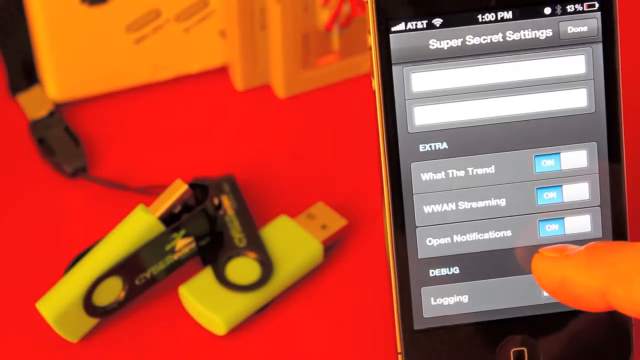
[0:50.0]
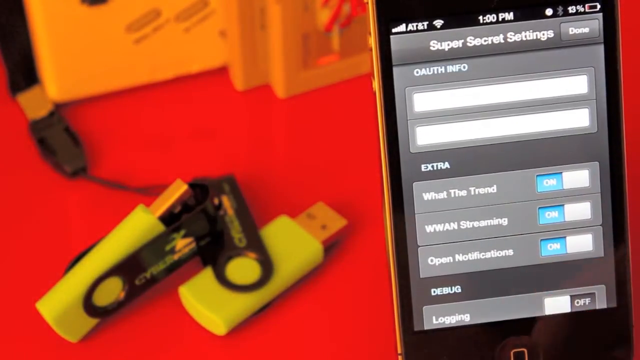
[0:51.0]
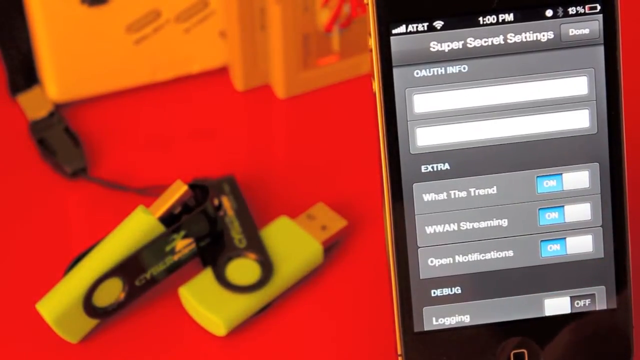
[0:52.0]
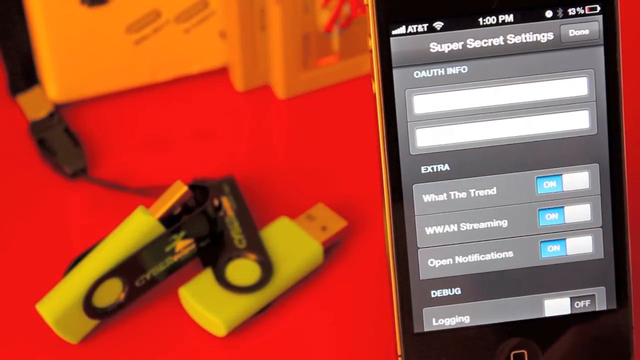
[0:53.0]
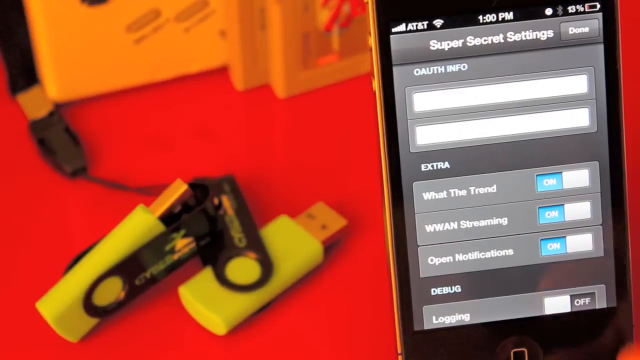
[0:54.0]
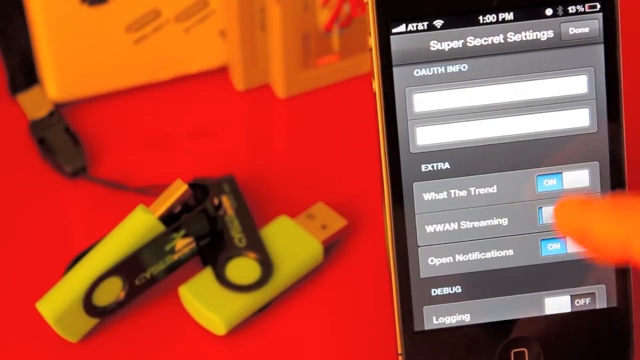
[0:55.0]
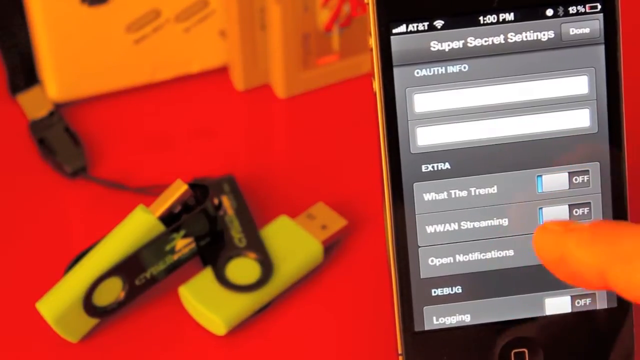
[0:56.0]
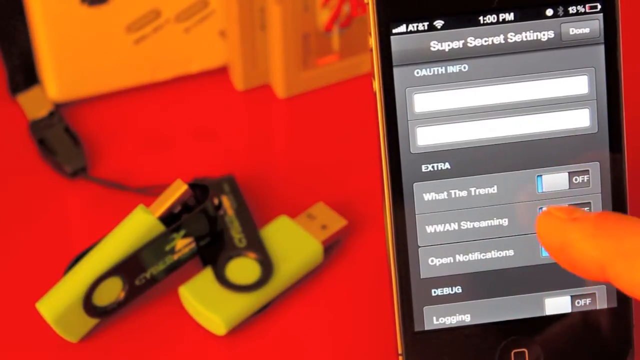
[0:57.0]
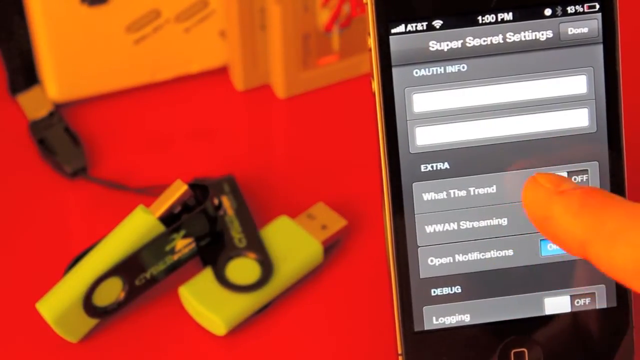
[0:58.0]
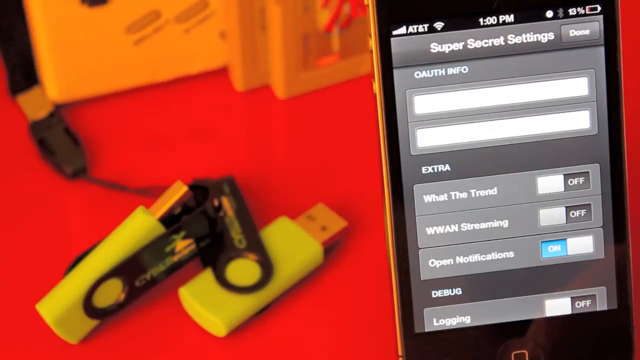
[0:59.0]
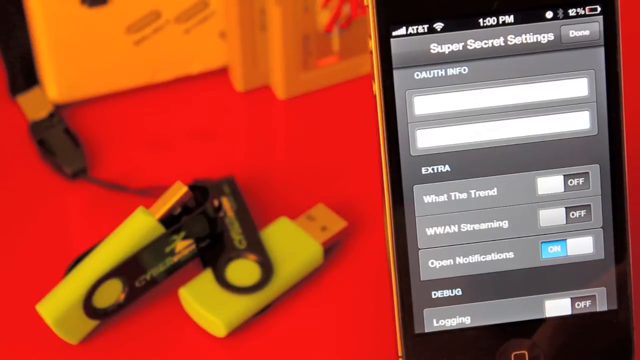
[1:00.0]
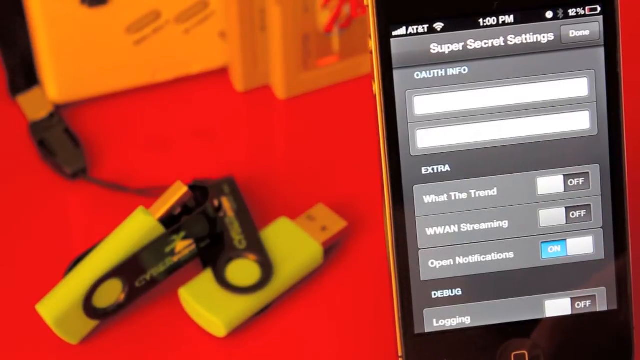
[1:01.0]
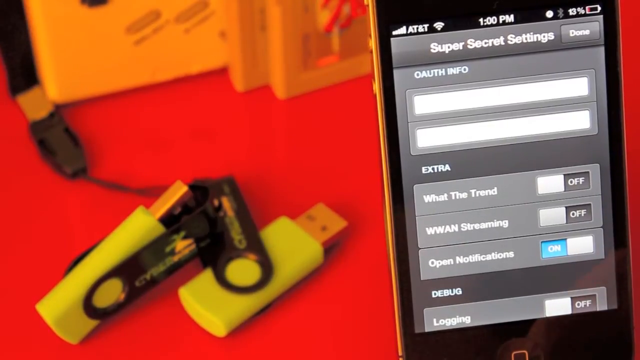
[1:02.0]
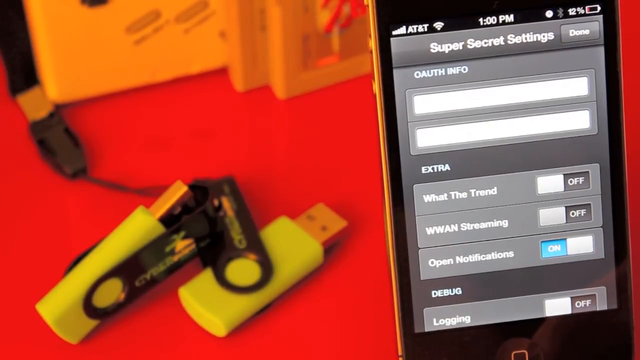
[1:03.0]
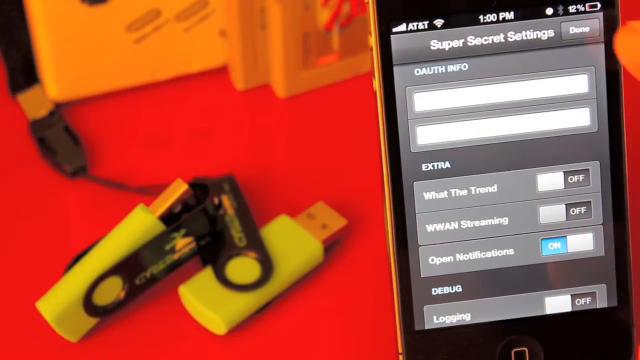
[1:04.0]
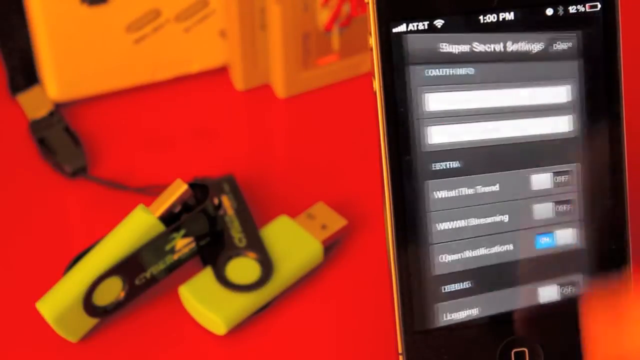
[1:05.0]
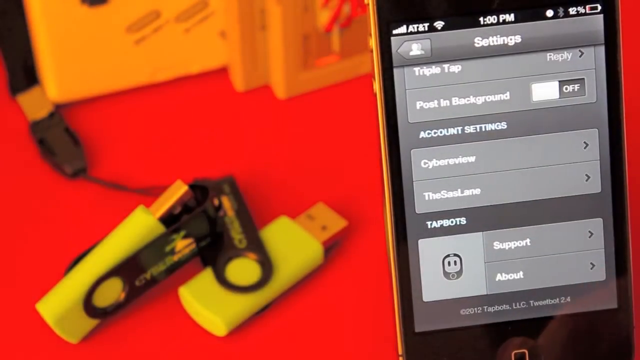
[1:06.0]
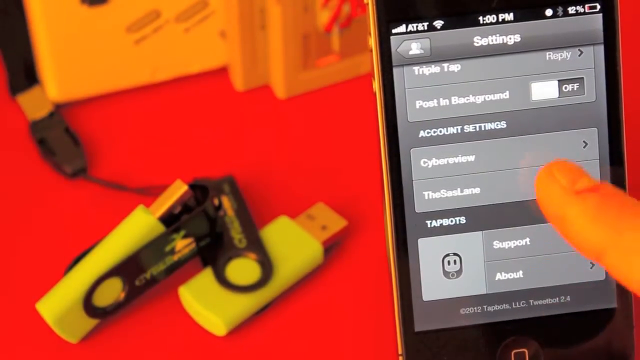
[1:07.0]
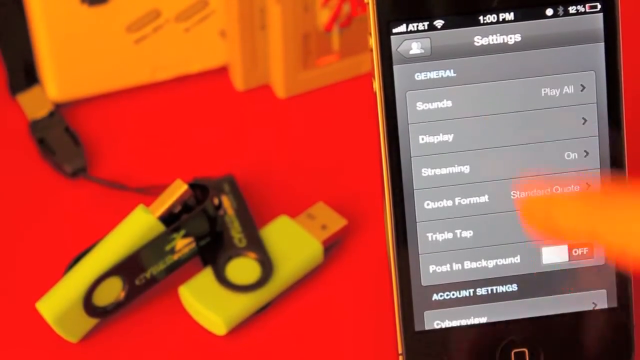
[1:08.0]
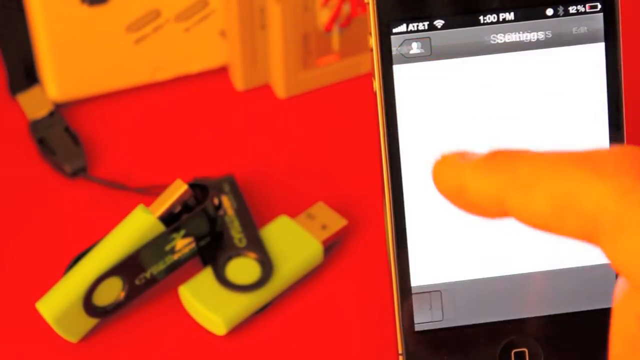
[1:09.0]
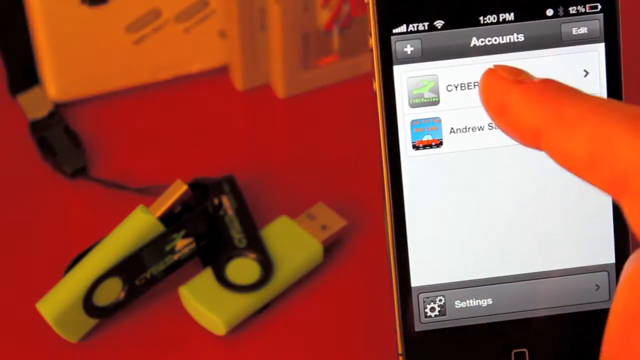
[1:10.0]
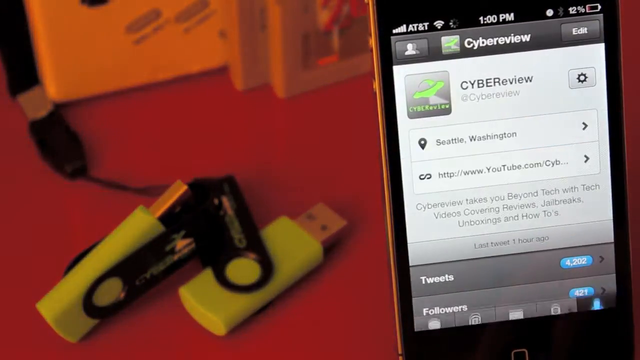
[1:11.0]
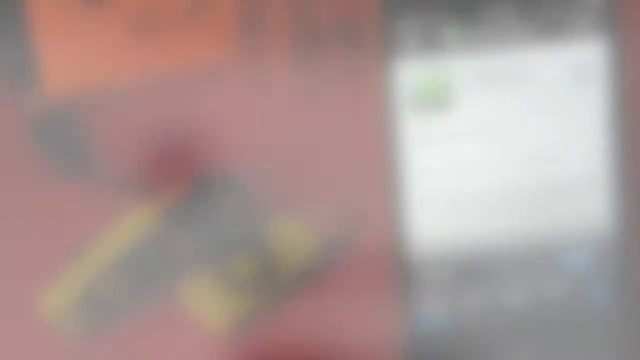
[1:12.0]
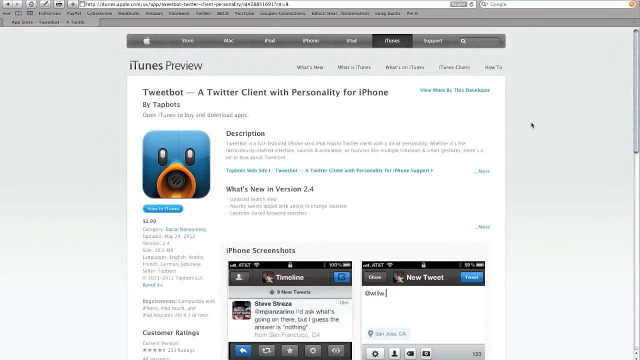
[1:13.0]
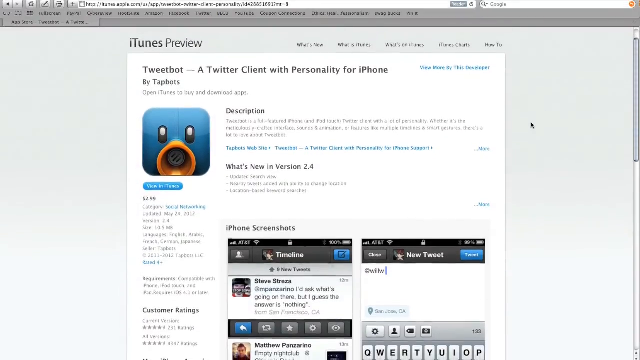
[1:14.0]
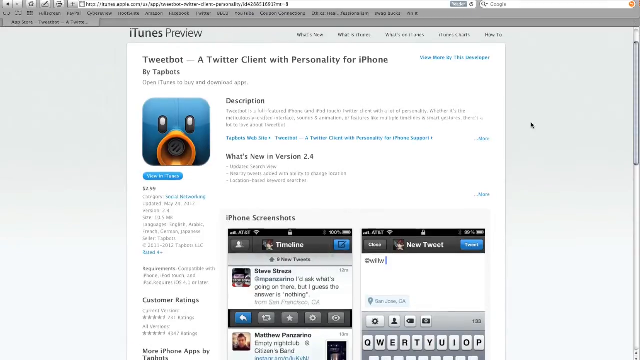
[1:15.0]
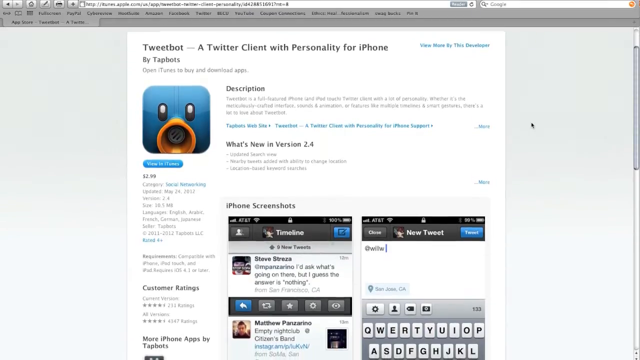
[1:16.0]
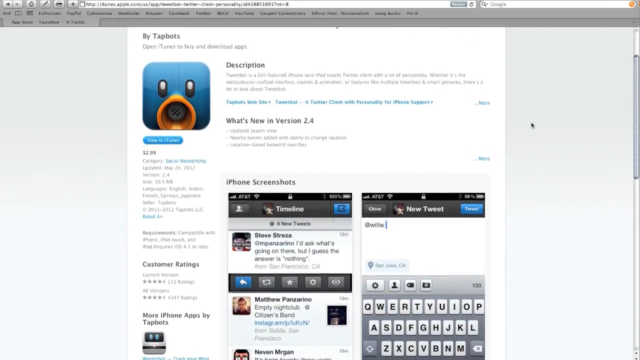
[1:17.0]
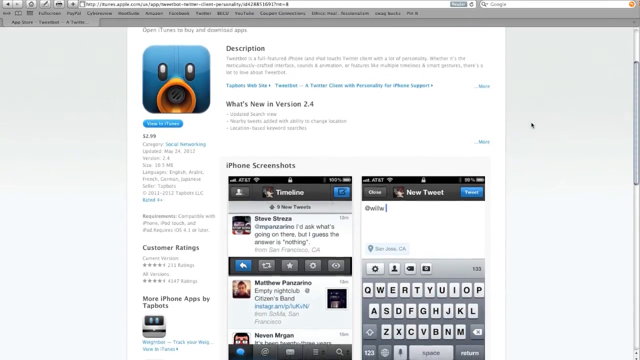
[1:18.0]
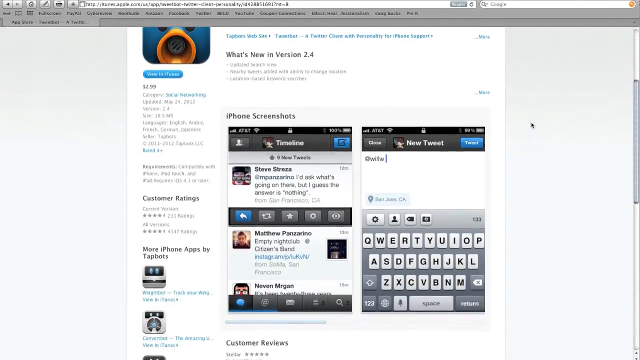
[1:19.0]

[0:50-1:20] The thumb drives lie on the red table beside the small phone on a stand. The phone shows AT&T with full signal, the time 1 p.m., and a 13% charge. The author is looking at a menu labeled "super secret settings." Under "extra" it says "what the trend," "WWAN streaming" and "open notifications," and underneath that it says "debug and logging." The author's finger touches the screen, moving up and down and back and forth; he turns off "what the trend" and "WWAN streaming" and leaves "open notifications" on. He then goes up to the top, scrolls back through the accounts, and goes to the same account as before. This time he is at a Twitter client showing "what's new in version 2.4" with a picture of something like a square duck's face. He scrolls down the page, looking at iPhone screenshots.